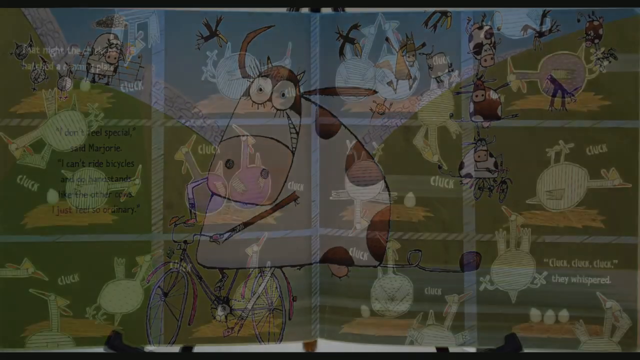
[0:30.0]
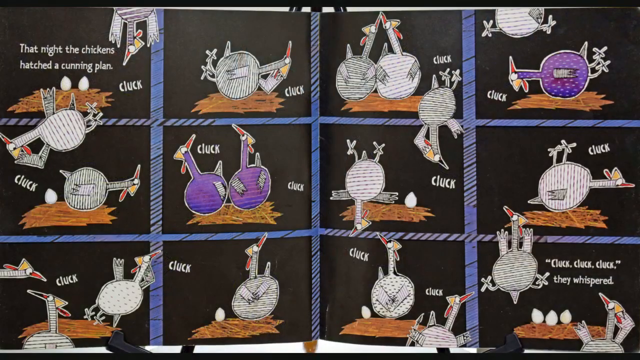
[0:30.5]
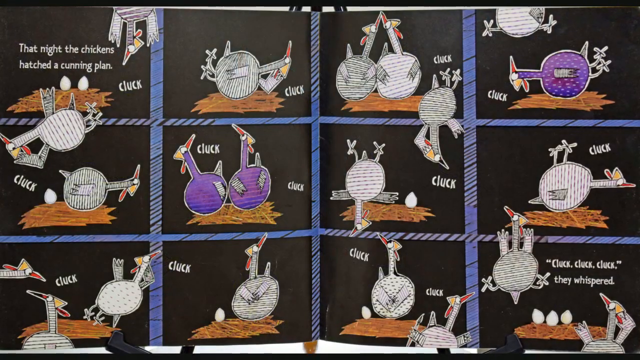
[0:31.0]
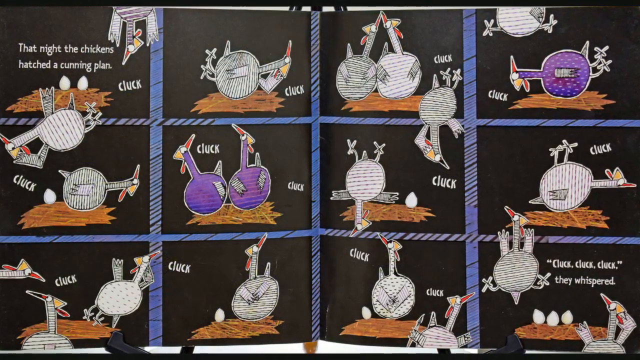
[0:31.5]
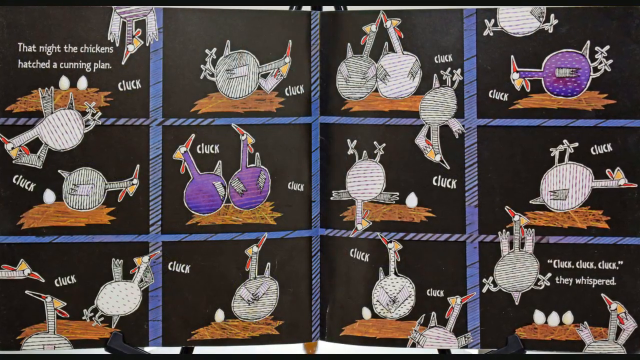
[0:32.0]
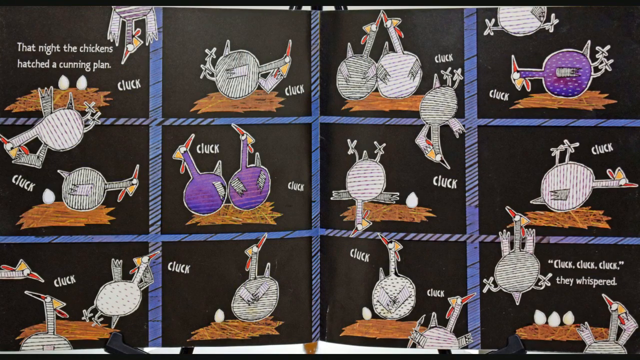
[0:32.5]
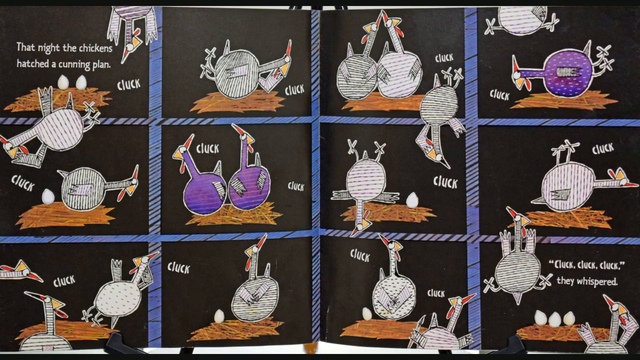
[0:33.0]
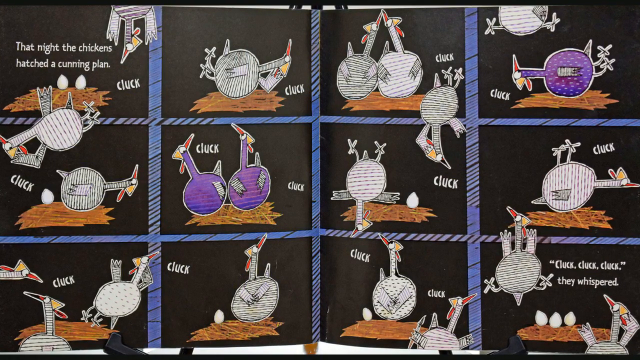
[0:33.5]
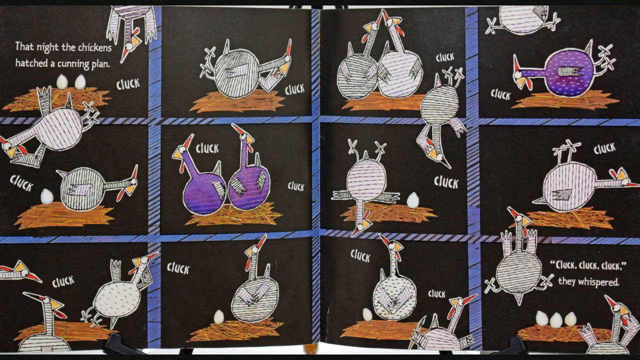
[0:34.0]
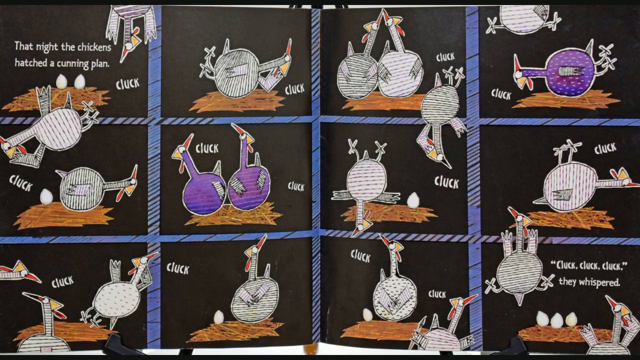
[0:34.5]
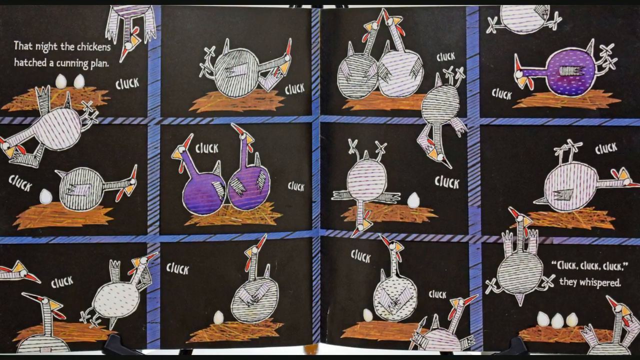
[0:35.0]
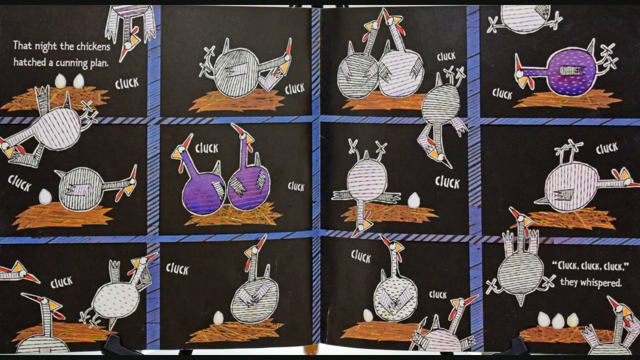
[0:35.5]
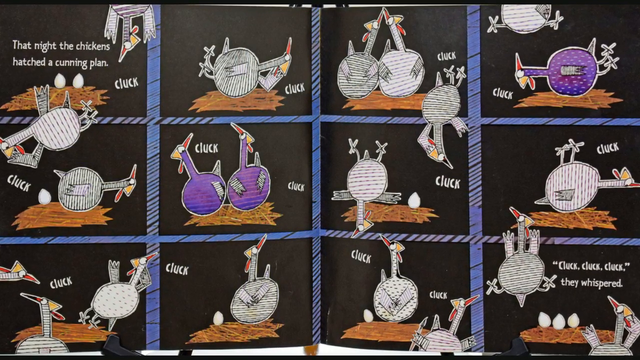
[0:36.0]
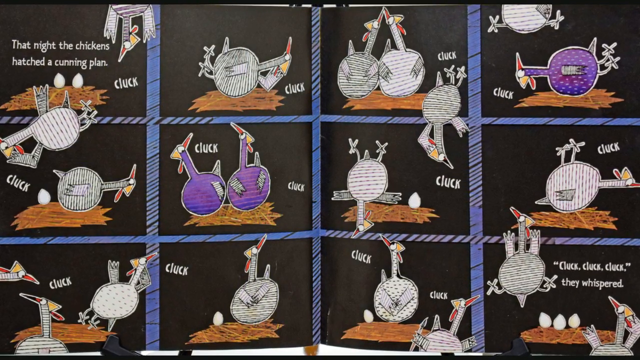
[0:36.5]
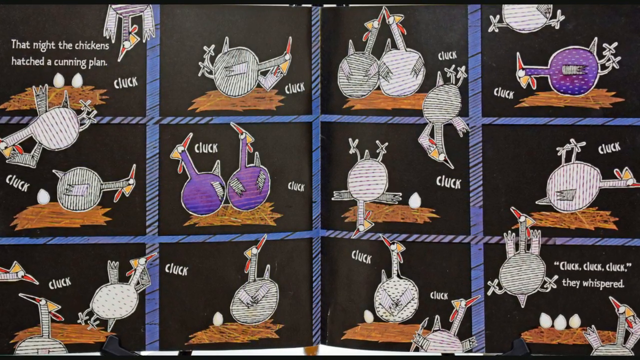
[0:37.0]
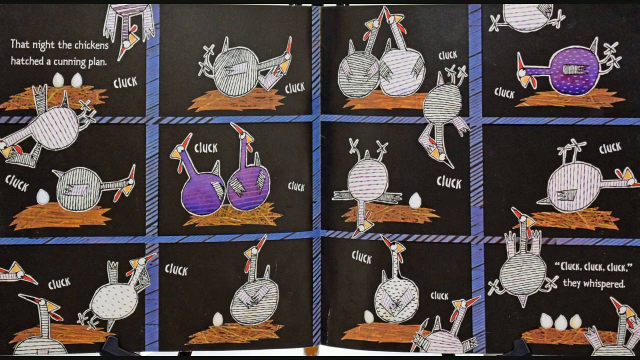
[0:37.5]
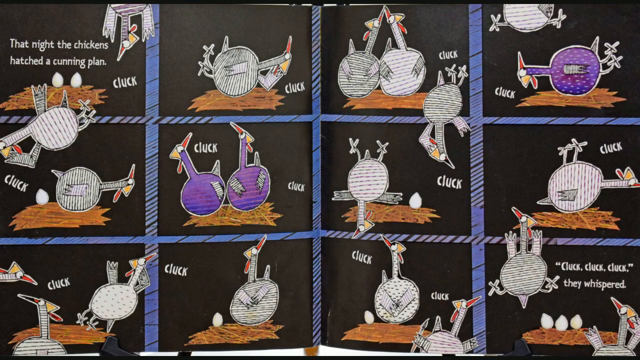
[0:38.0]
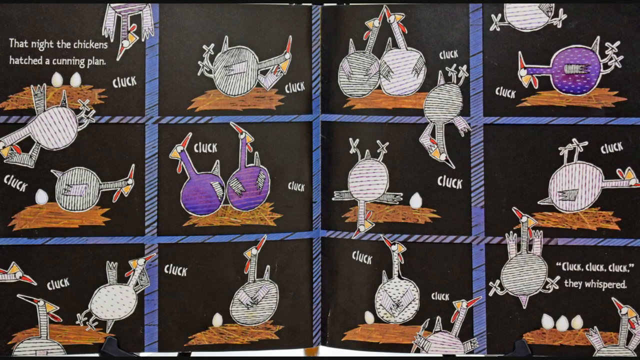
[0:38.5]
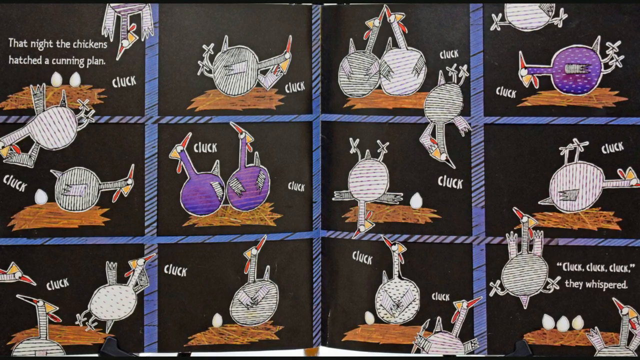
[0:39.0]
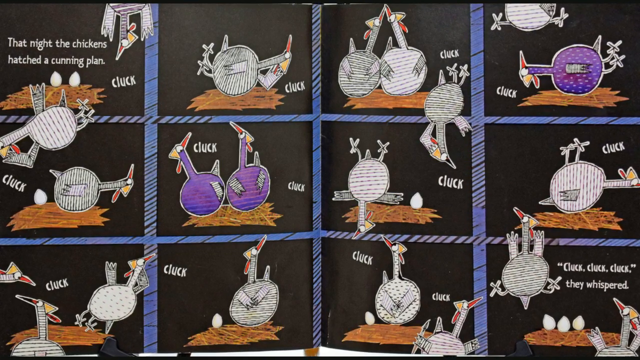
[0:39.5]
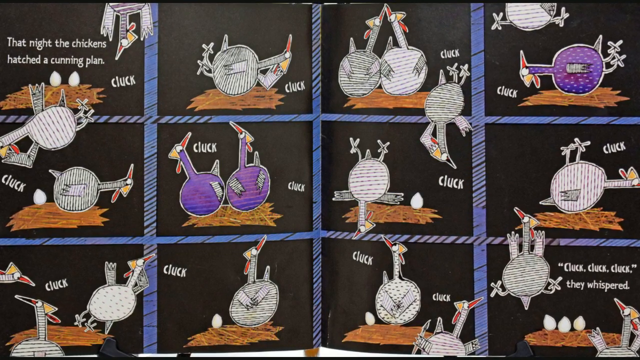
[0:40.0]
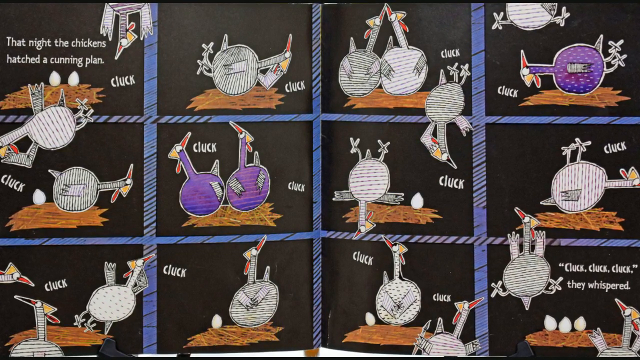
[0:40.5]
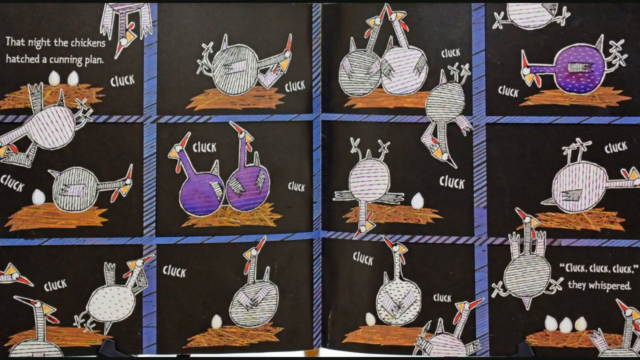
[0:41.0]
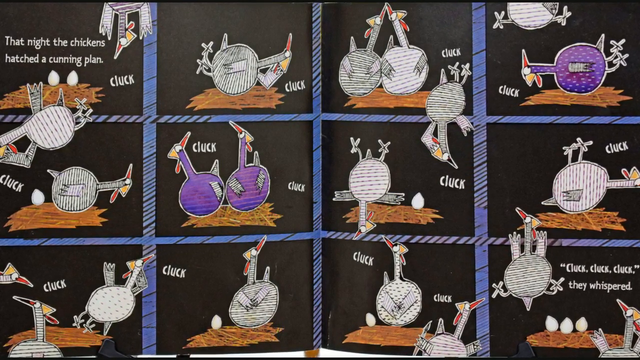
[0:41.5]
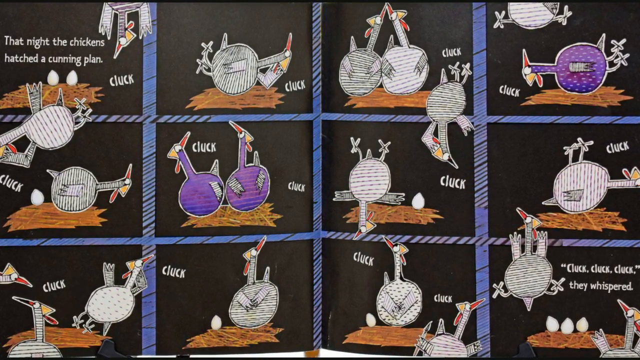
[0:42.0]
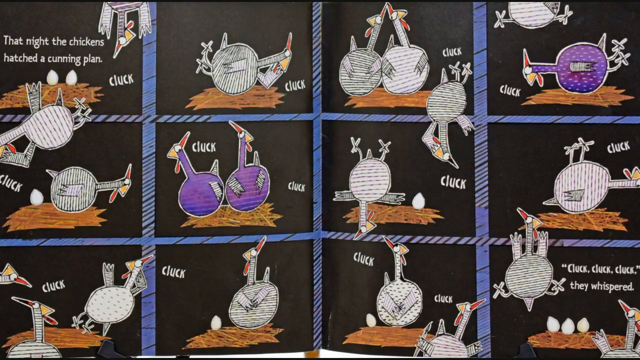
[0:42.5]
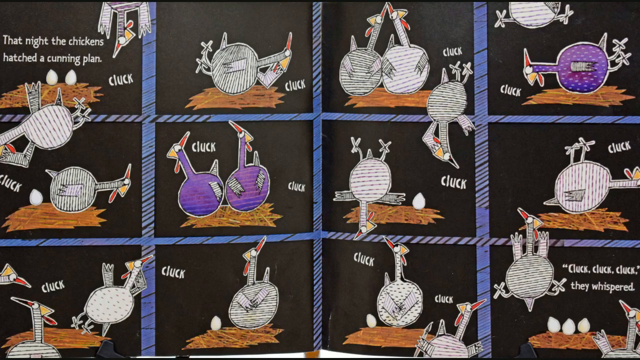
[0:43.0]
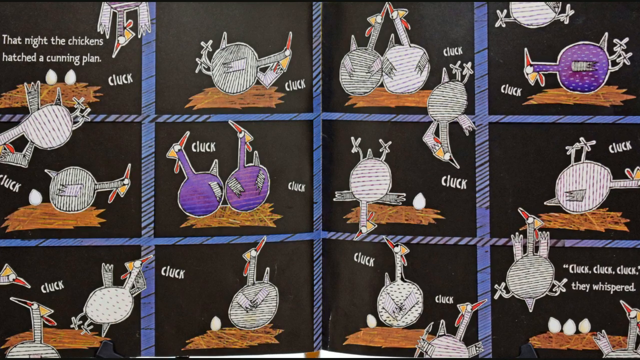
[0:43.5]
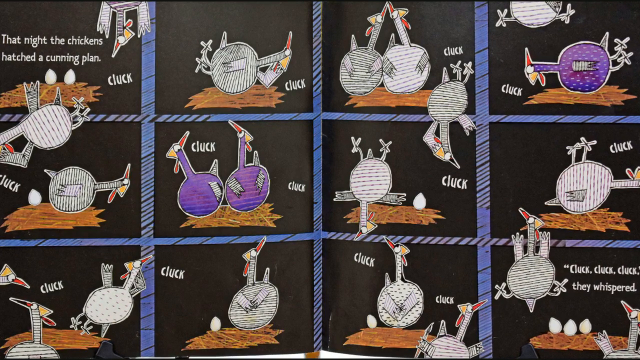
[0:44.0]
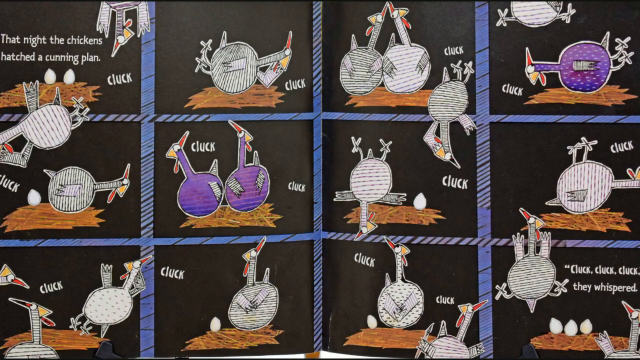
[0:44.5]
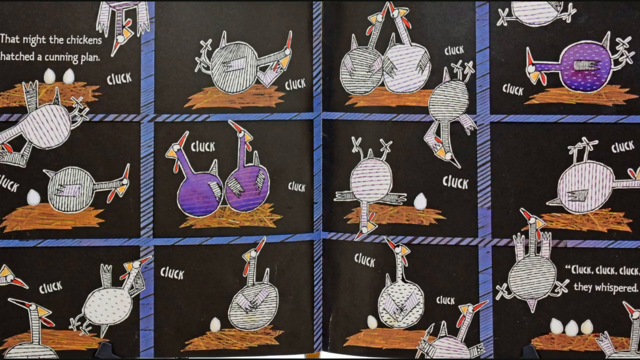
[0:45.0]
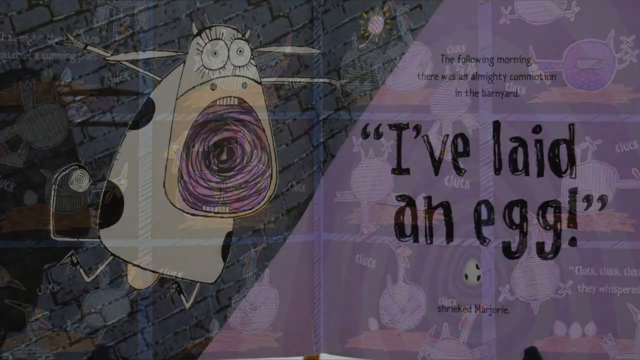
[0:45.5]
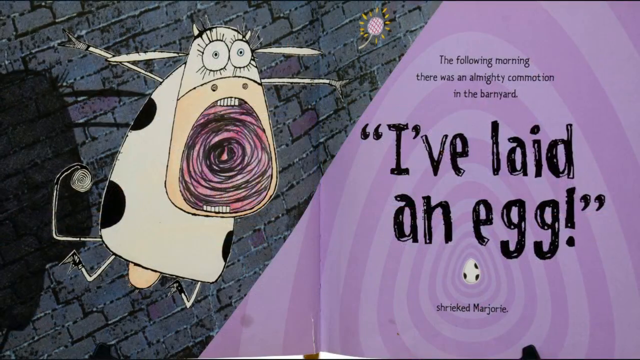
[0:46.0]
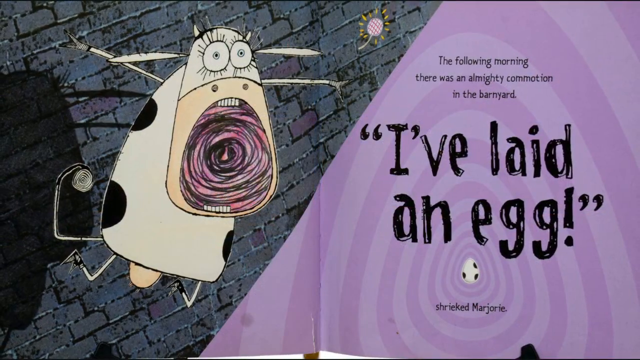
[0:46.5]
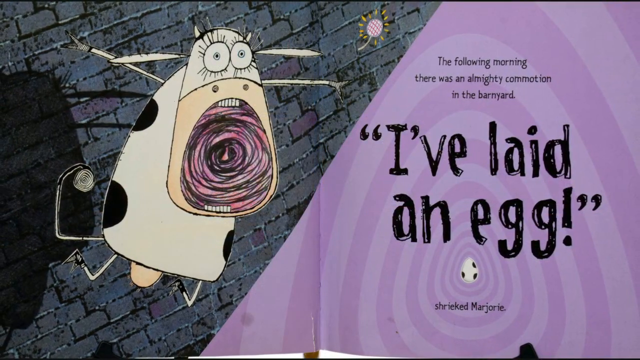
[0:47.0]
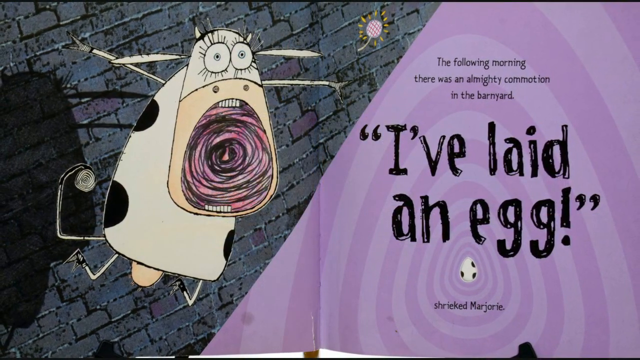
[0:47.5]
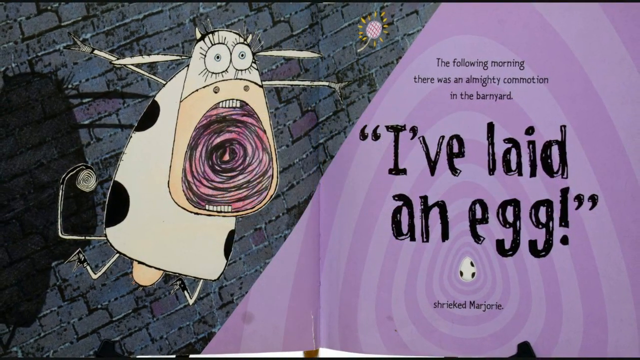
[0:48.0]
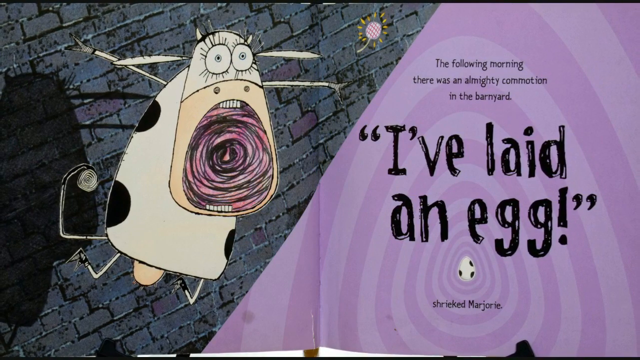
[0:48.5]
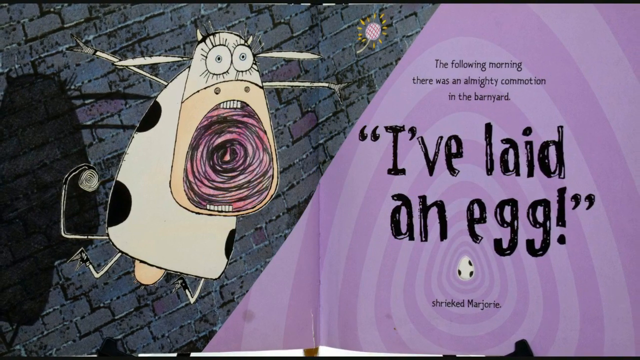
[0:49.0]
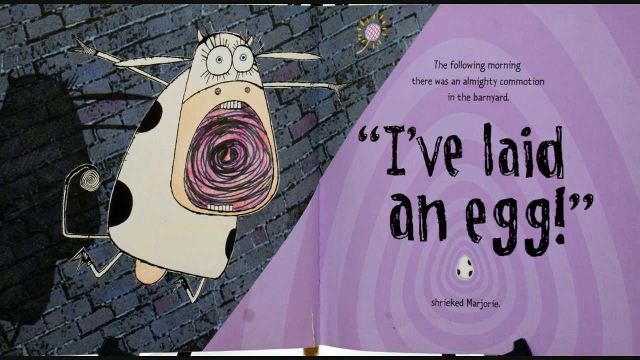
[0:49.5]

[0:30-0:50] The book continues: "That night the chickens hatched a cunning plan. Cluck, cluck, cluck, cluck, cluck, cluck, they whispered." On the following pages the chickens have a plan for the cow to lay an egg, and the cow has a shocked face as "the next morning there was an almighty commotion in the barnyard." The text reads "I've laid an egg" said the cow Marjorie. The video then cuts out. In the drawings, the chickens are white, a few are more of a purple color, and some look like they have a little gray on them because of the shading. The chickens sit in nests that are kind of a brownish color, arranged in boxes, roughly six on the left page and six on the right page.